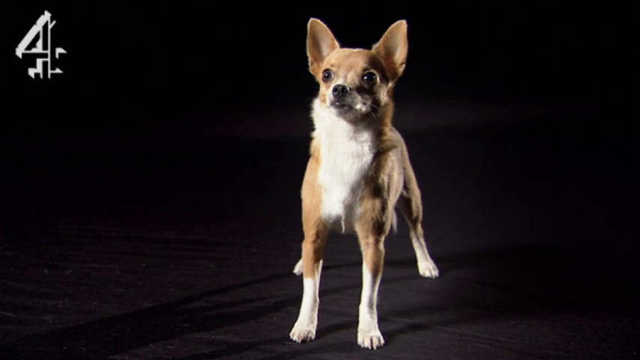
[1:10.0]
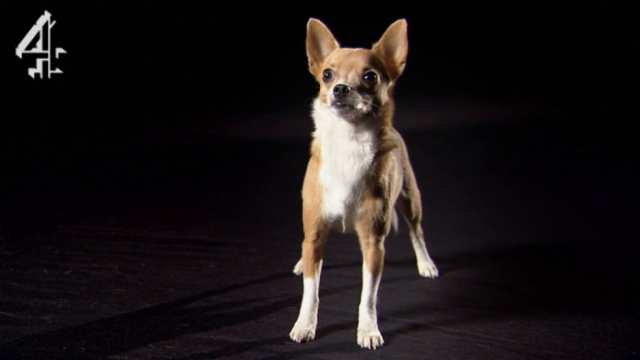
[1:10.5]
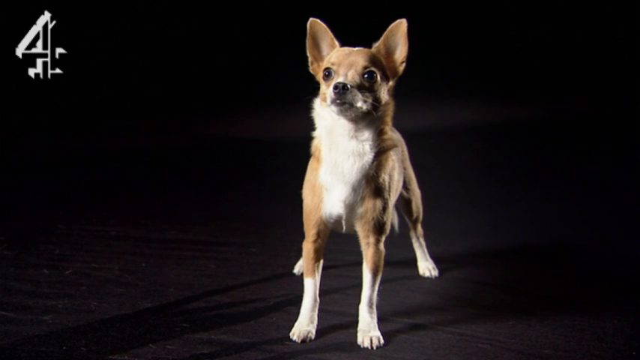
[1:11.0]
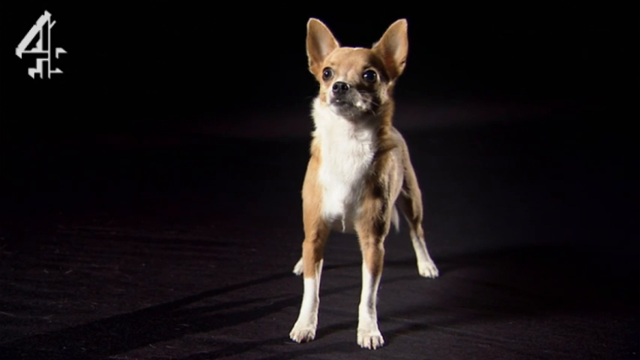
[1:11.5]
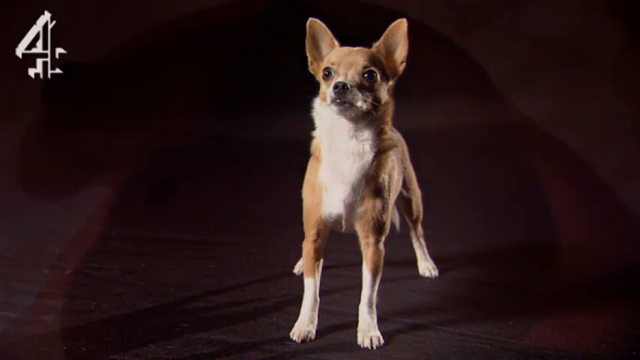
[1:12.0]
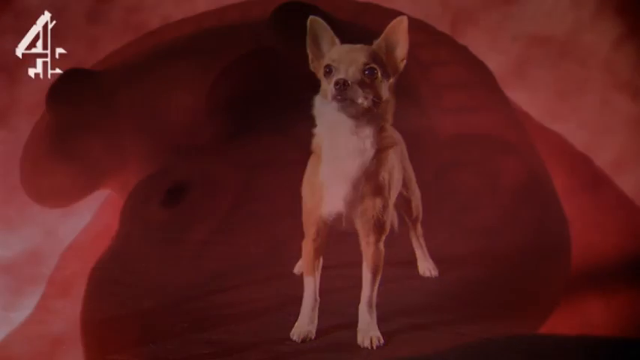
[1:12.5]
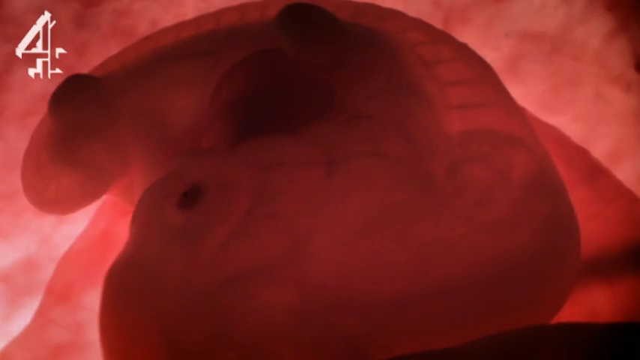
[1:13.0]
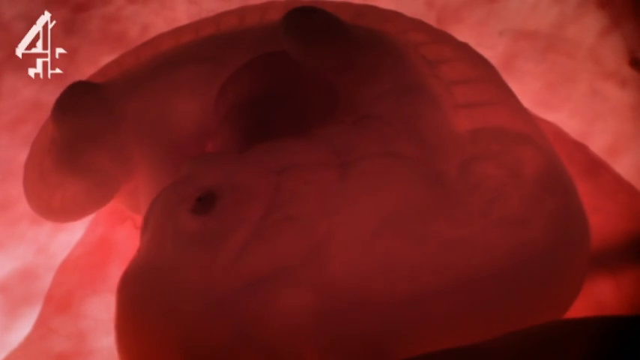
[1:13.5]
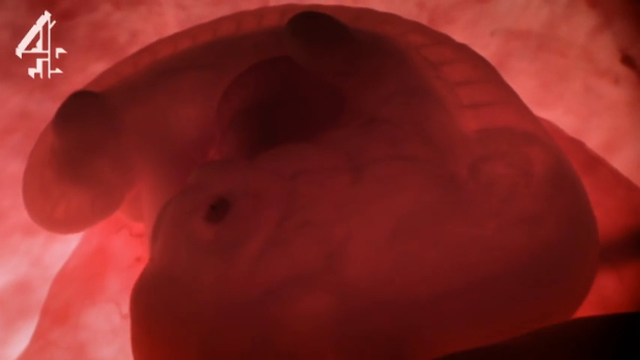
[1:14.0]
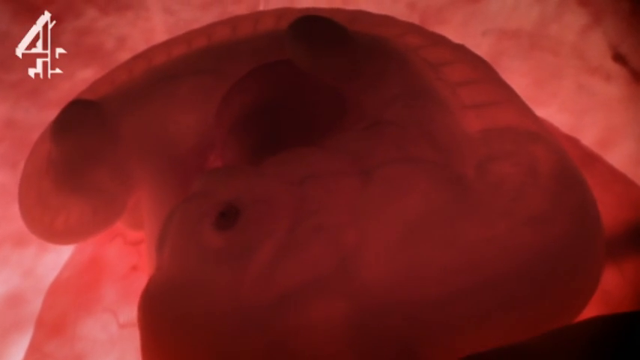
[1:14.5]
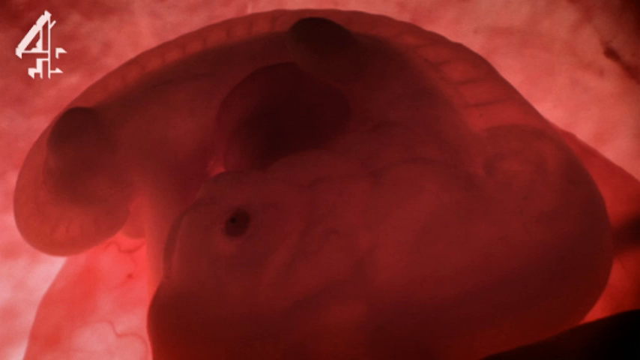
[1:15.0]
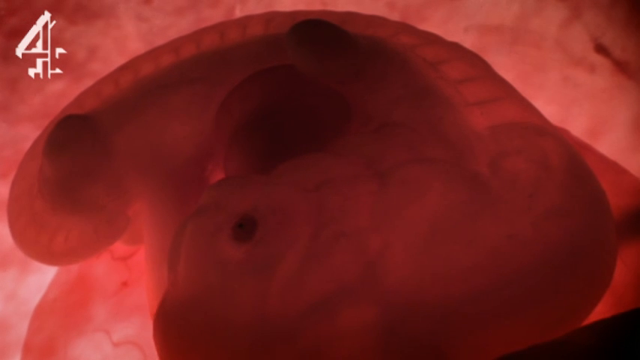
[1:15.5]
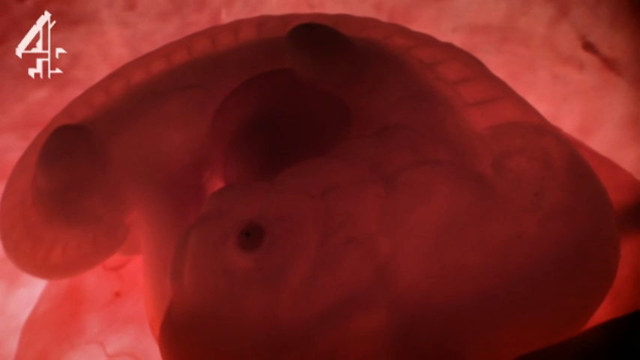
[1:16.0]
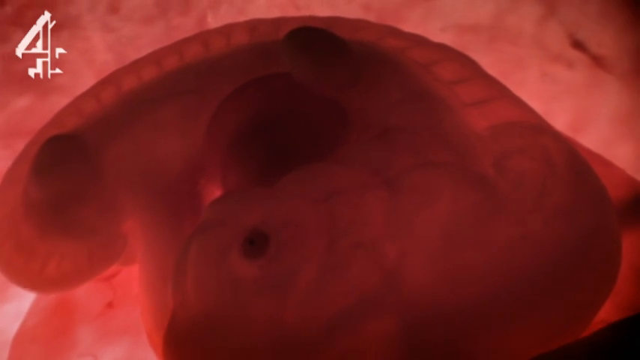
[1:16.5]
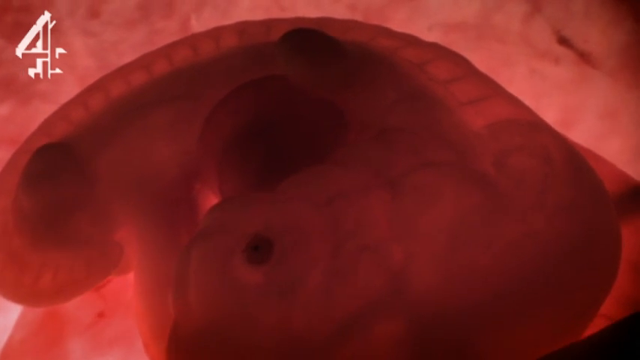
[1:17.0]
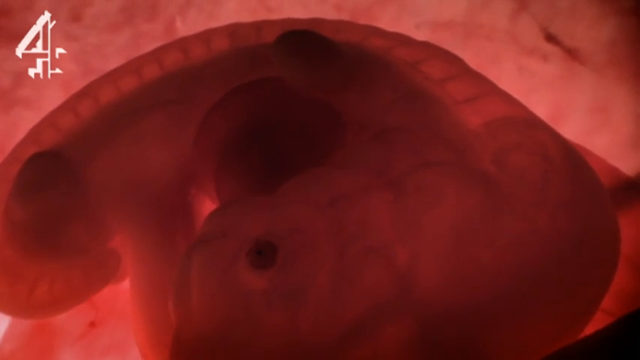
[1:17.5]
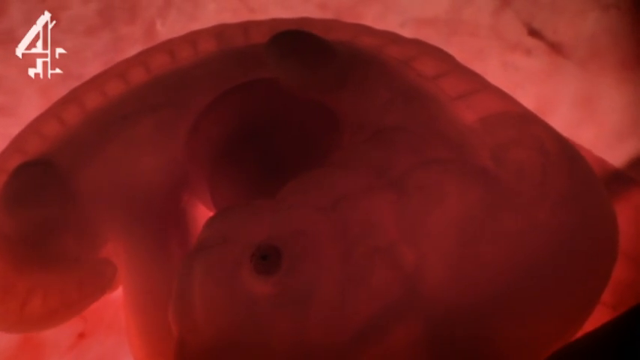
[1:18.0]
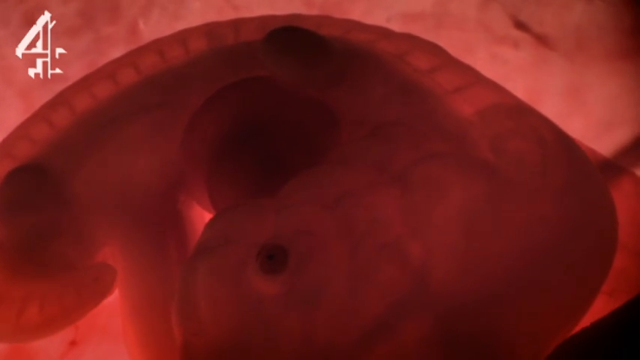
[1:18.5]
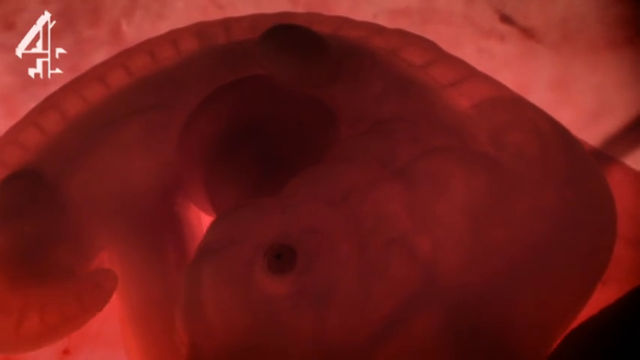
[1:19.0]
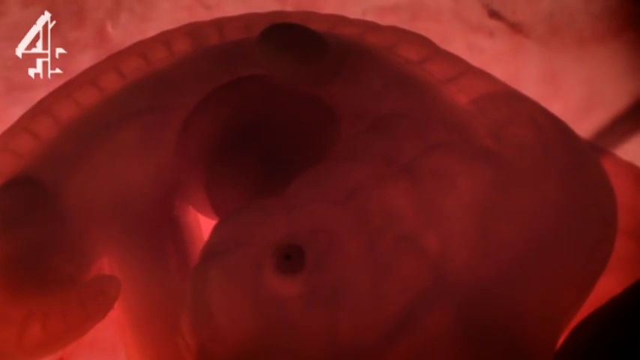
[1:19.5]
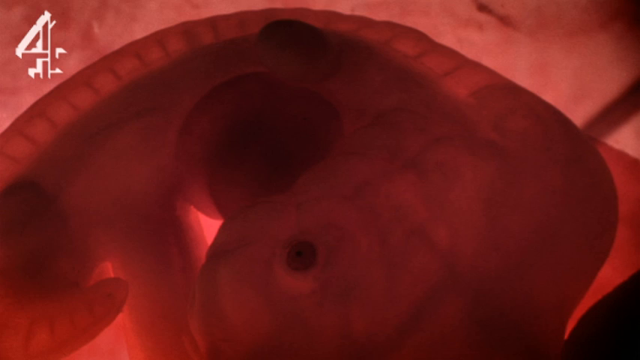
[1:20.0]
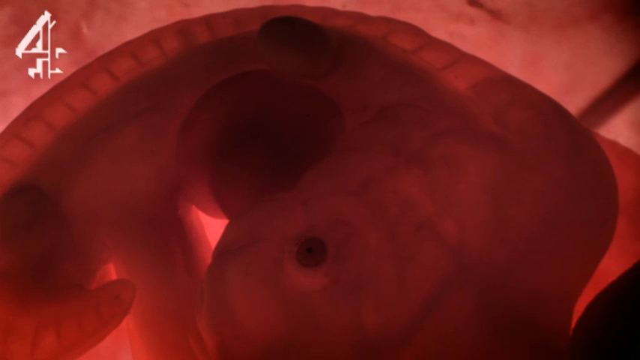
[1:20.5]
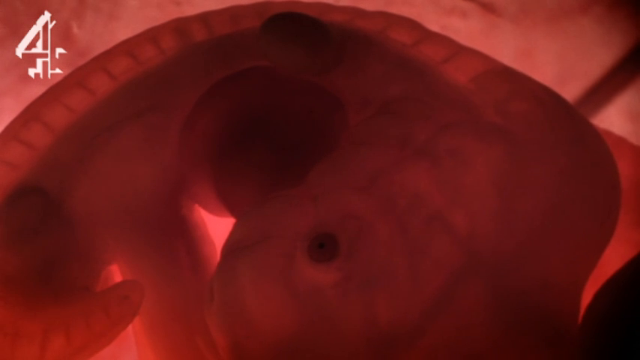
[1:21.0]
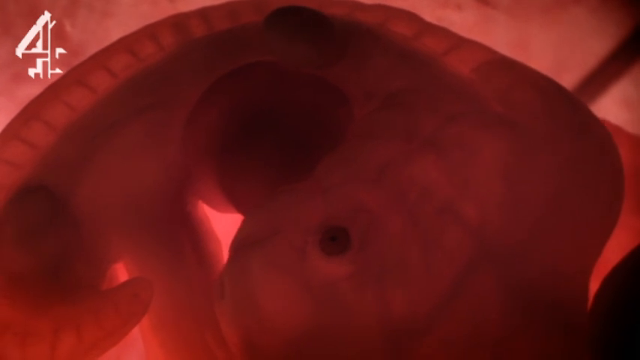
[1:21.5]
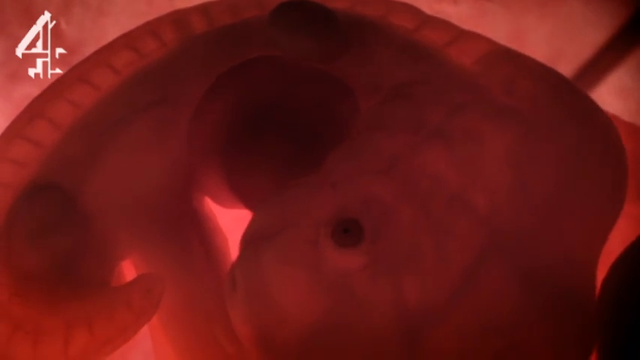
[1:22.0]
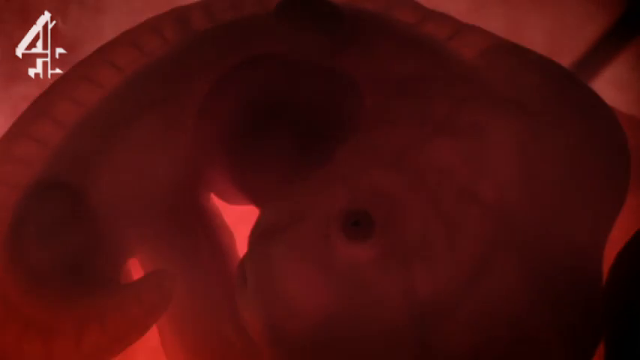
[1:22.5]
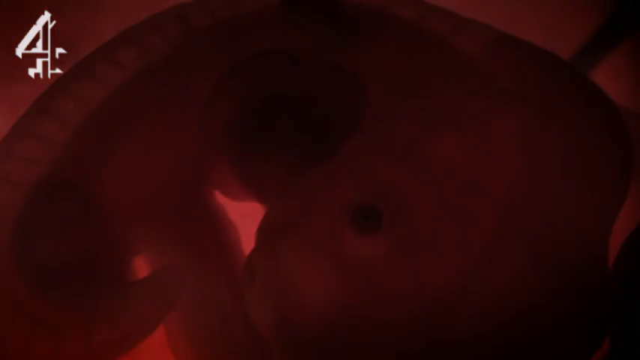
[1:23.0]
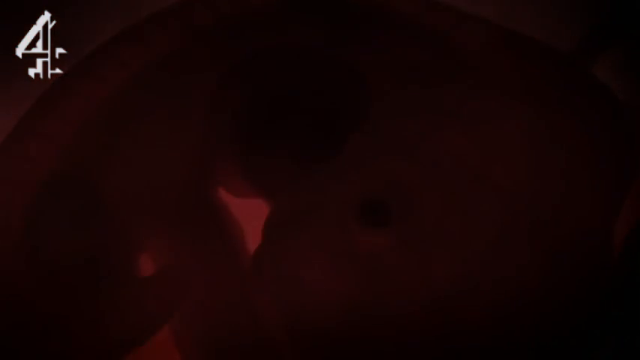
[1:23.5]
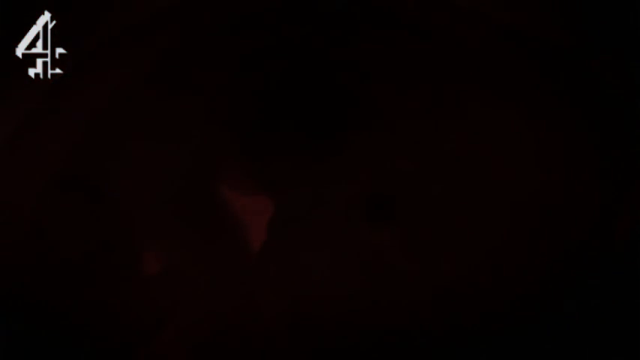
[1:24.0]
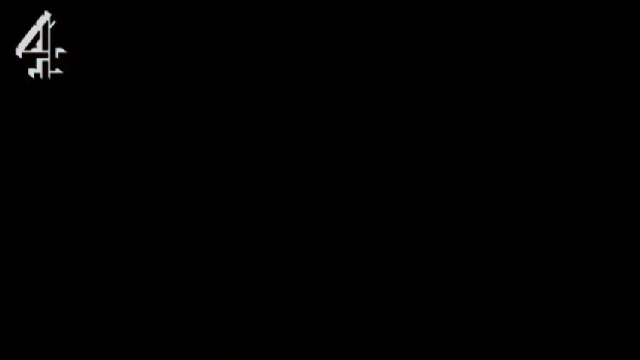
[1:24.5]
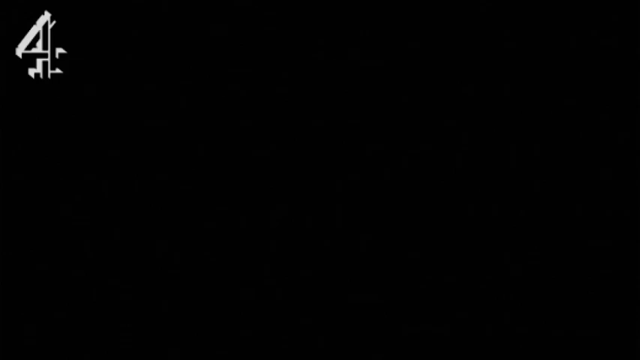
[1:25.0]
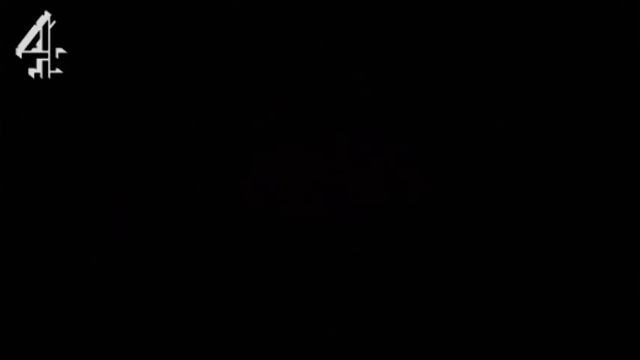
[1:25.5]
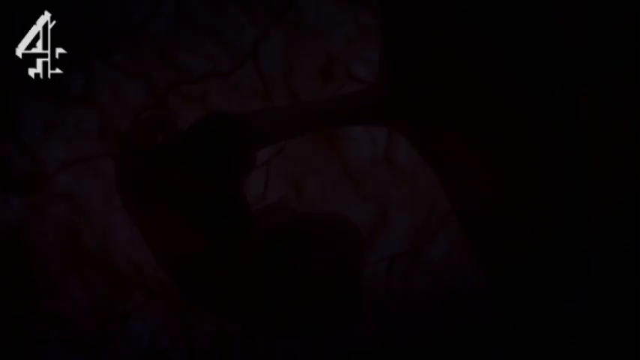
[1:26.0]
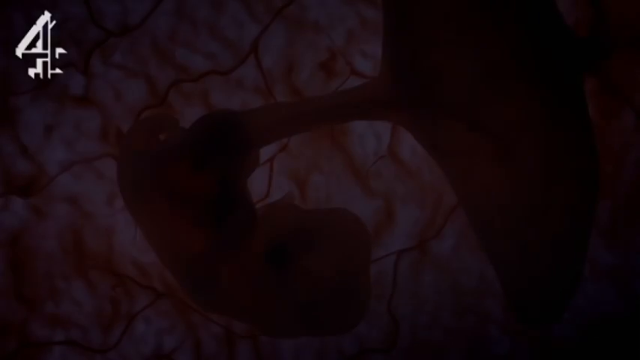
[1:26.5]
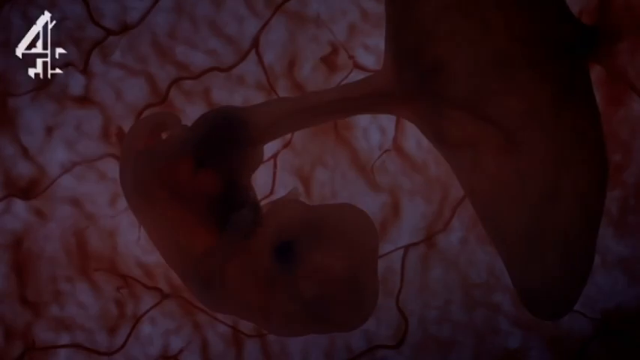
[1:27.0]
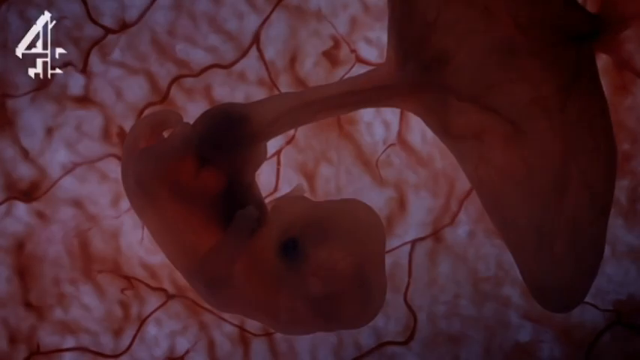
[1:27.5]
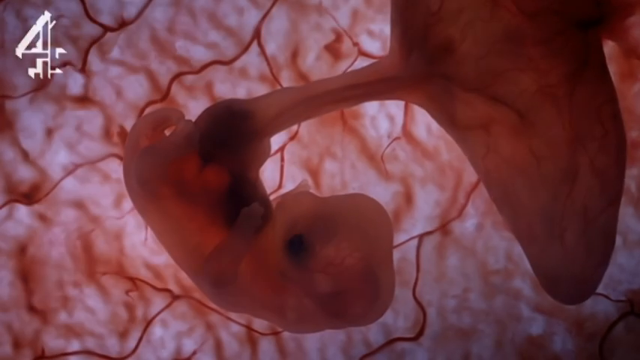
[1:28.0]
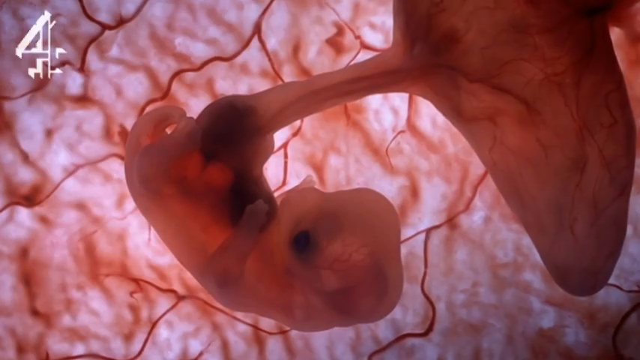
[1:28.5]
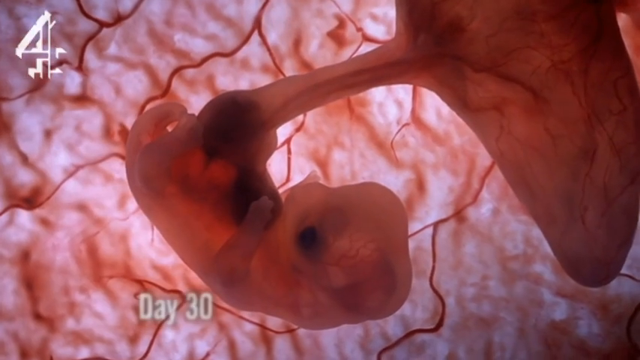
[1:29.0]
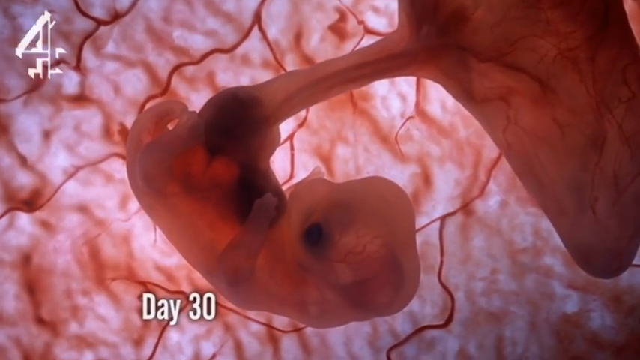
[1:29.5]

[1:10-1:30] A very small dog has pointed ears, a small oval head with a long area coming to the front as a mouth, and round brown eyes. It has a white chest, and tan on the face and ears that comes down both sides of the chest at the shoulder area, halfway down the leg; the chest up toward the right side of the face is white. Its extremities are white, mostly the front ones. The image fades into the red object, which turns from left to right. The formation is a half round or circle, turning with the portion that looks to be the head going around. Day 30 is shown, what the object would look like at 30 days. A large tube area connected to the object comes off the upper right side of the screen. The entire screen is a dark pink mauve, with a distinctive eye staring out. The view moves to the area where the object has its connection to the outside, with a lighter pink area behind it. Multiple red lines run in different directions behind the dark pink, maroon, multicolored object.